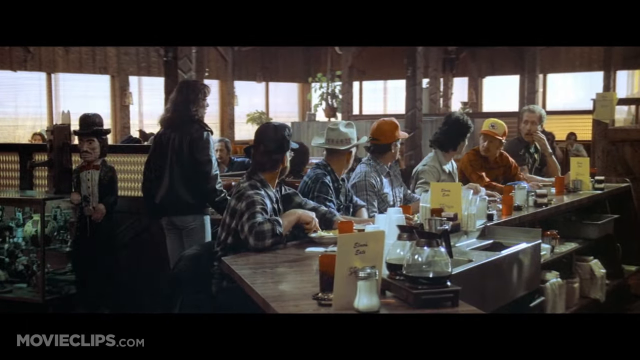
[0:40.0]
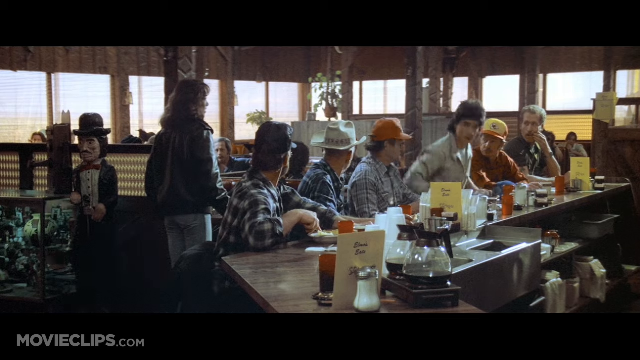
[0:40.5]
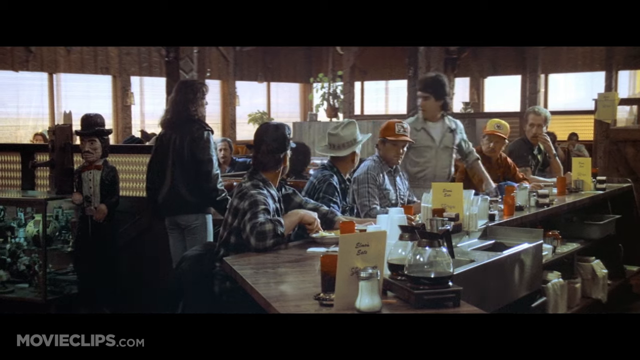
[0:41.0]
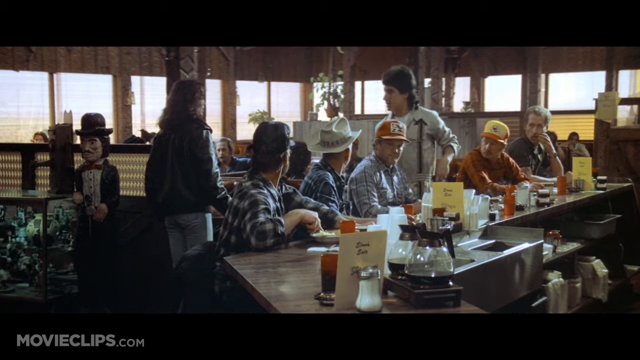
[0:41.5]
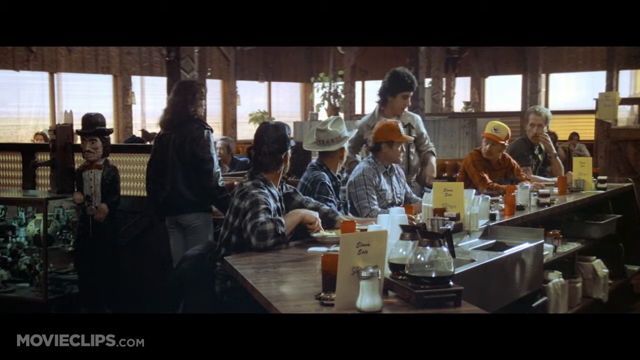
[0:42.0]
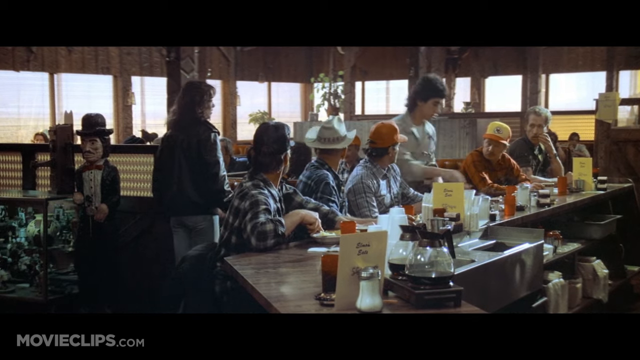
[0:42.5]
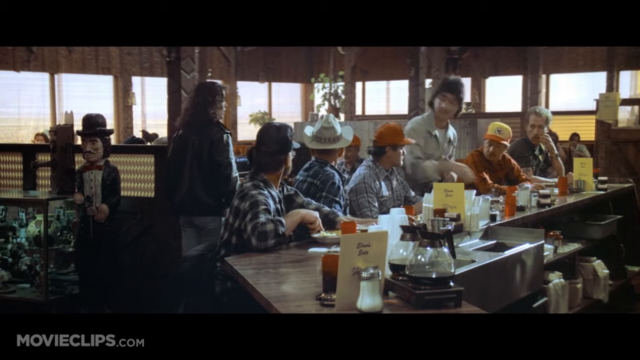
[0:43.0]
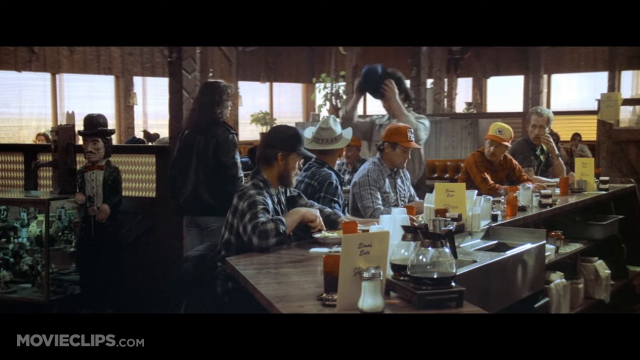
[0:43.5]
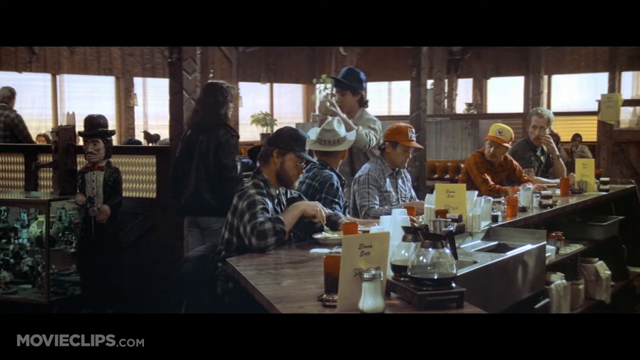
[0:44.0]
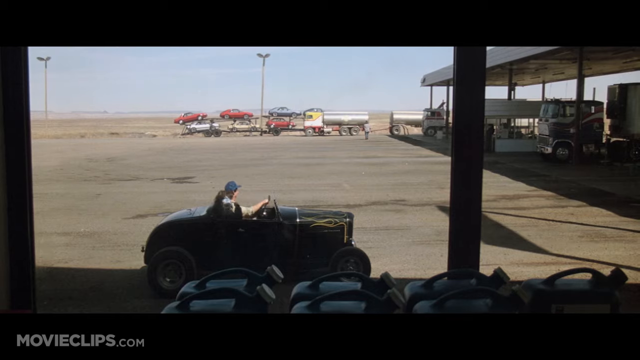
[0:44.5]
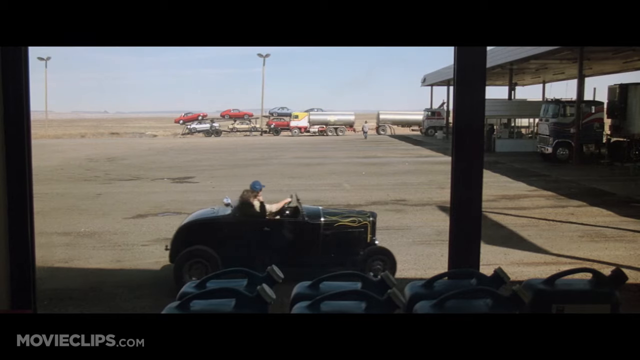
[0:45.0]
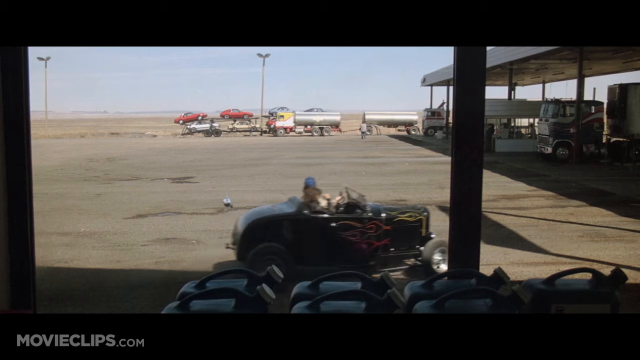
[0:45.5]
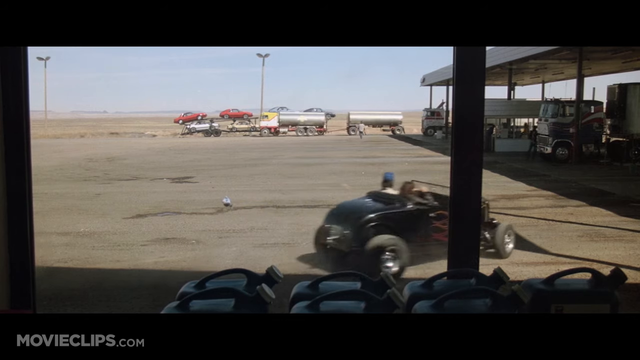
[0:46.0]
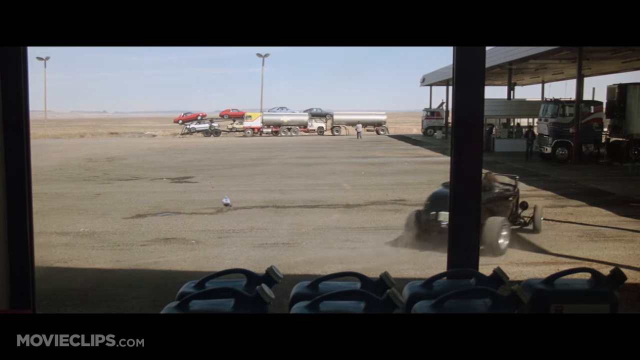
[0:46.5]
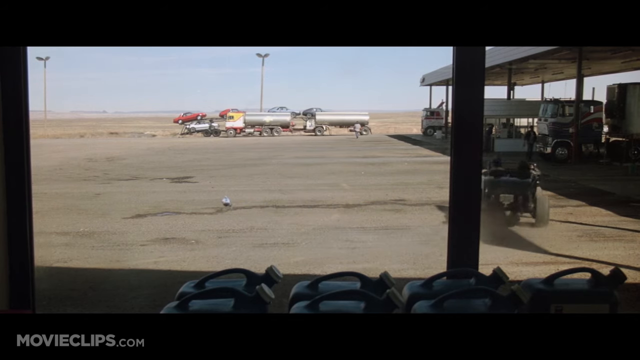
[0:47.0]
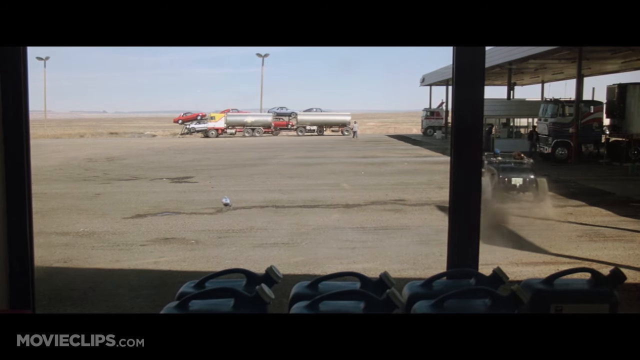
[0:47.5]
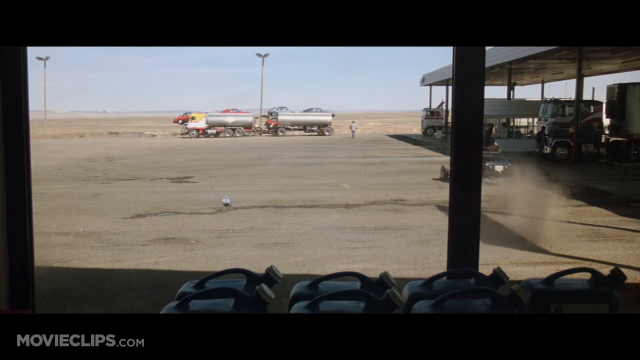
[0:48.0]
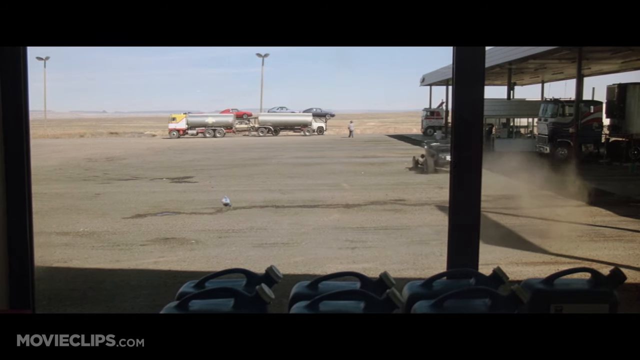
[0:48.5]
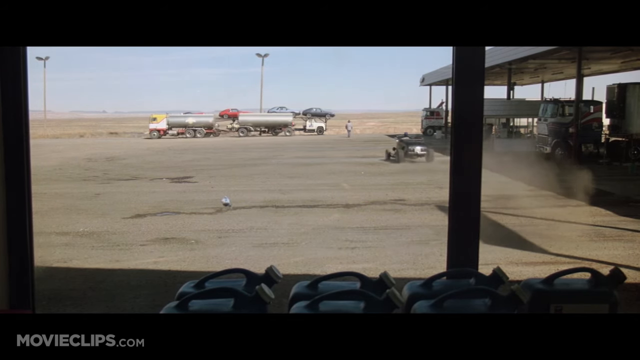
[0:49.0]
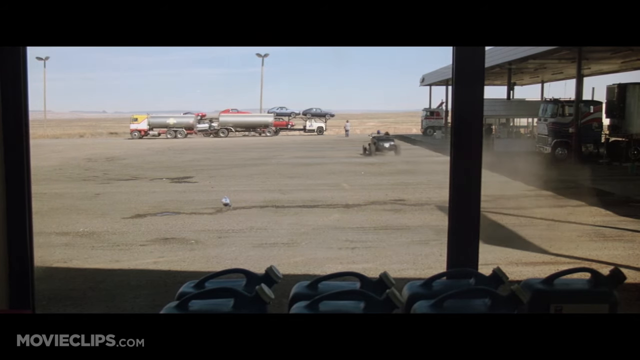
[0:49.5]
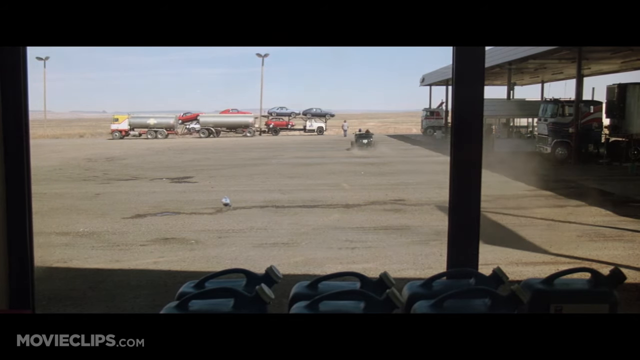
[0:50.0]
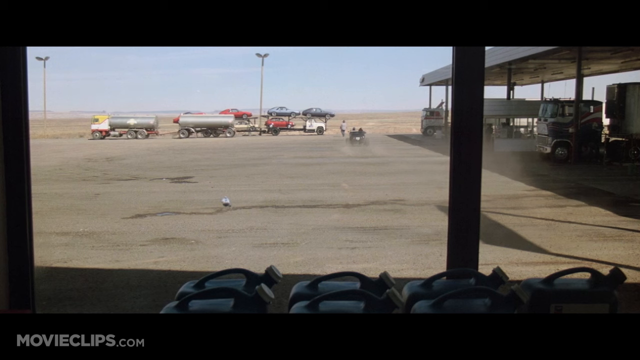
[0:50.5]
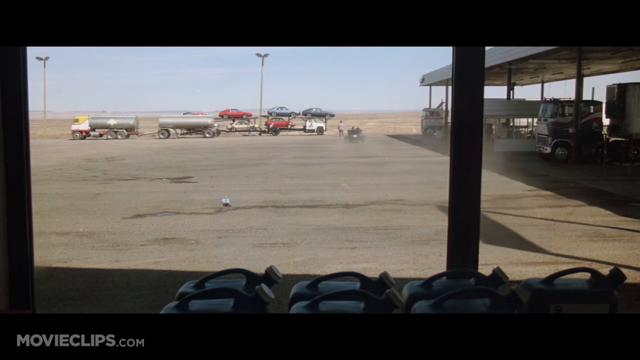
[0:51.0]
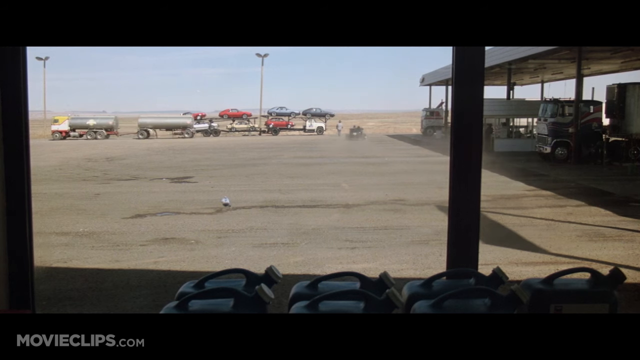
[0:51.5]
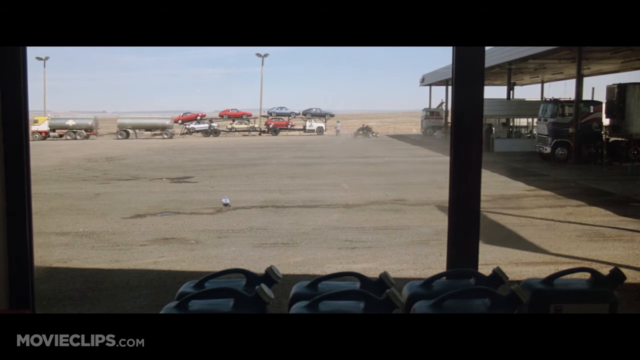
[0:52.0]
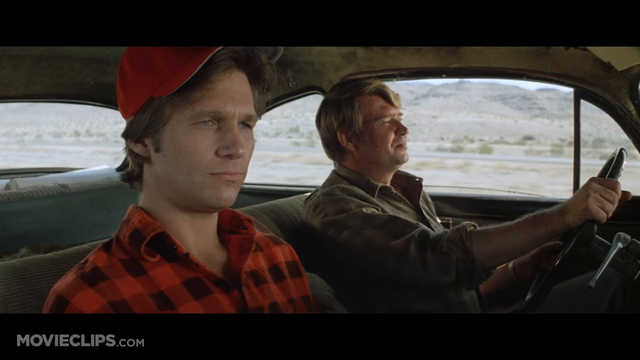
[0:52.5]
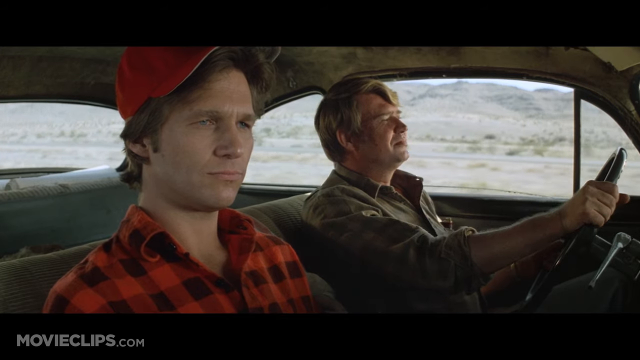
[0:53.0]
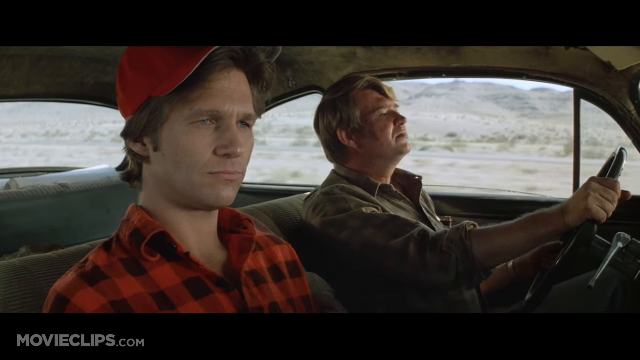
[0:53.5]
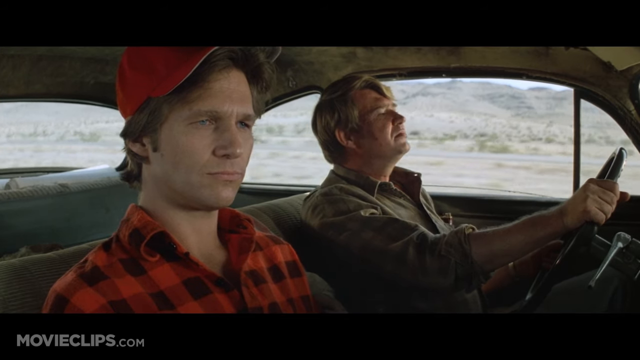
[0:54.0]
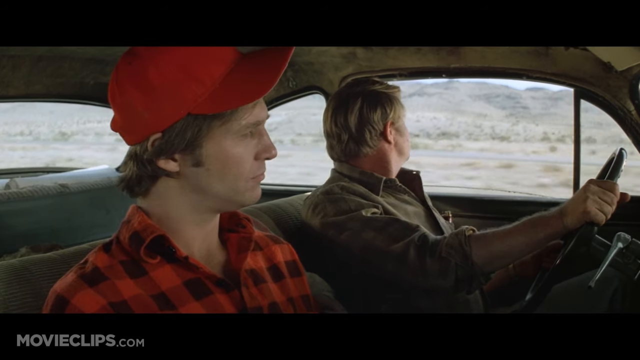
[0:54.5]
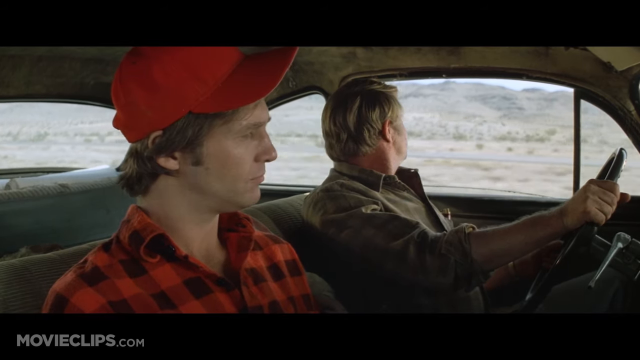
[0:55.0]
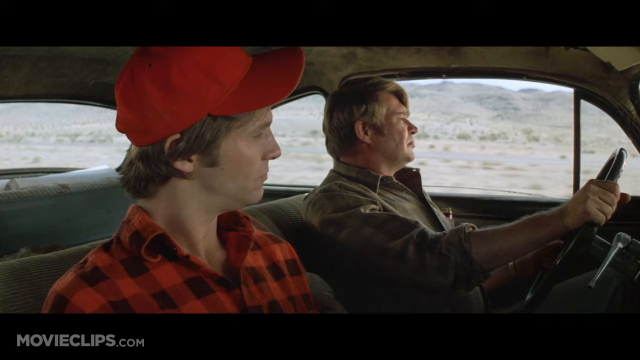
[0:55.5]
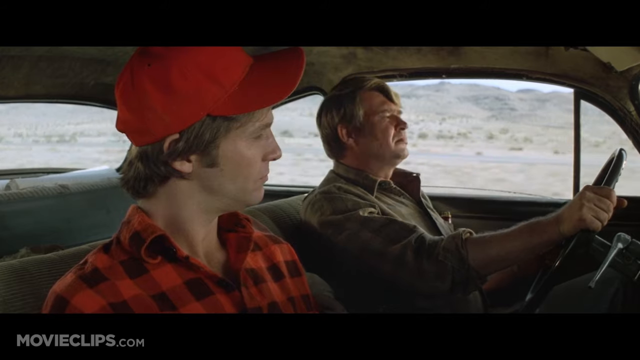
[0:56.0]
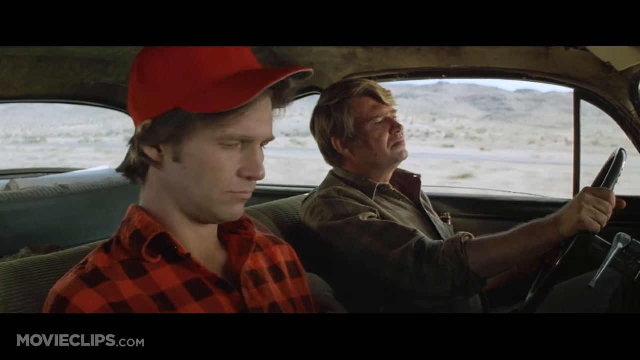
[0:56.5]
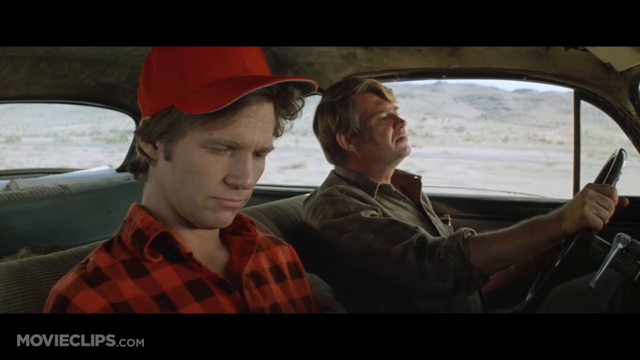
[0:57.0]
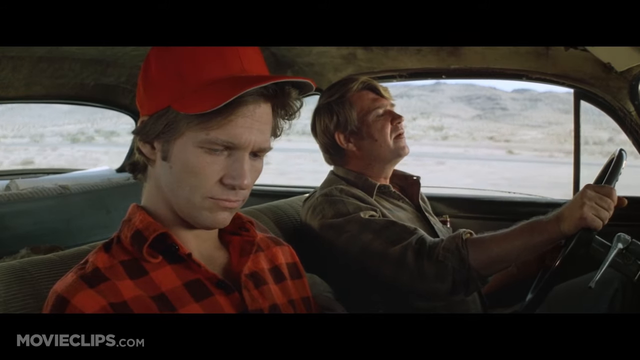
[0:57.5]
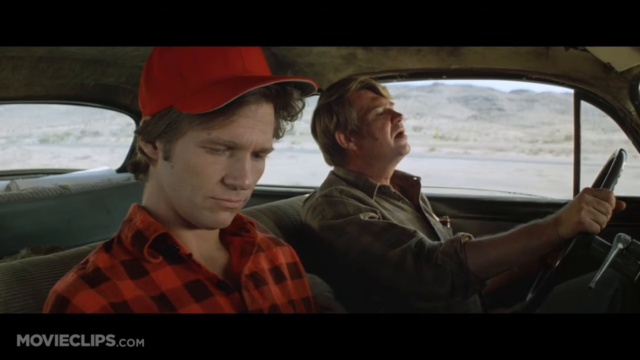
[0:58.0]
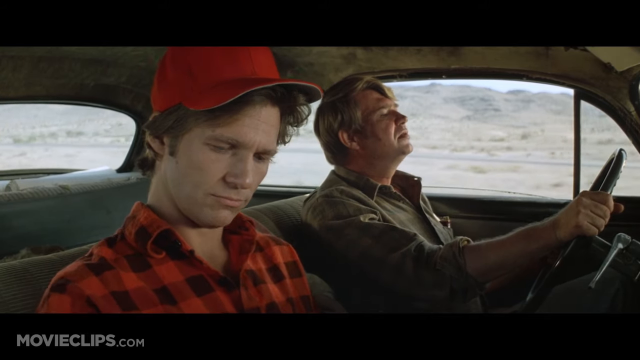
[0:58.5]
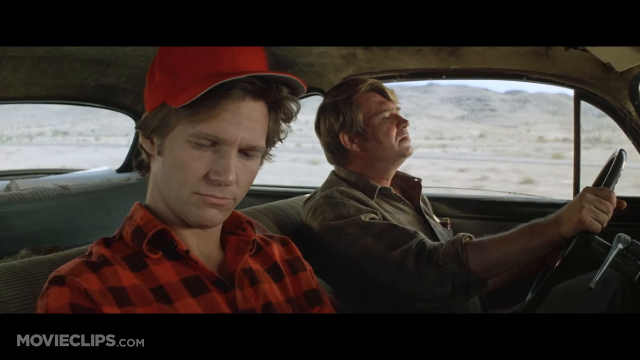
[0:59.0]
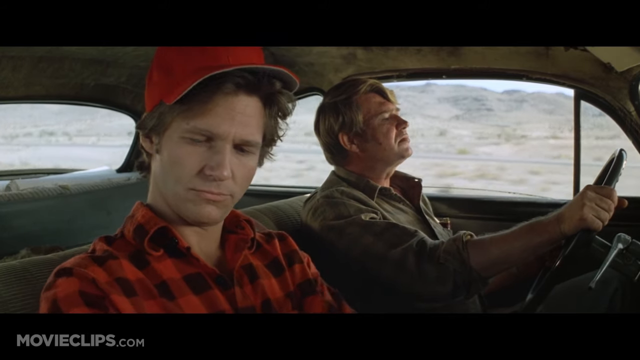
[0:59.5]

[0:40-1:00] In the restaurant, one man is leaving: he seems to leave his payment on the table, puts on his hat and starts walking as if heading out. Two men then drive in what appears to be a small car, going very fast. A silver tanker that looks like the kind that transports fuel is on the road; the car goes in the direction of the tanker, but the tanker moves over to the other side. An old man and a young man drive along the road in the car; the old man is driving, while the young man seems to be doing his own thing, touching this and that.